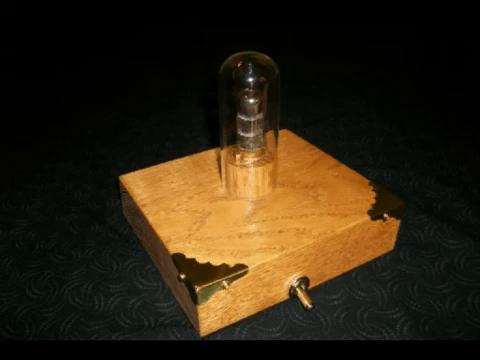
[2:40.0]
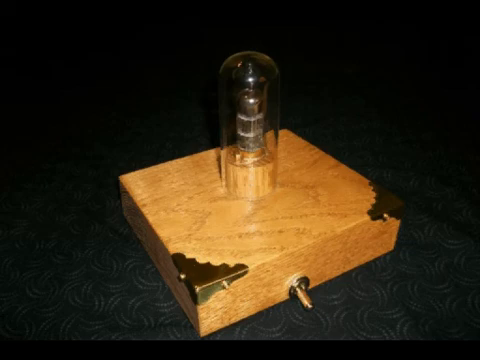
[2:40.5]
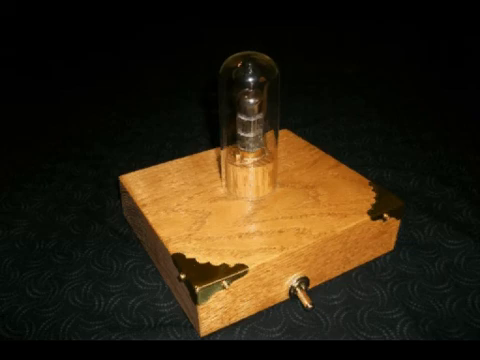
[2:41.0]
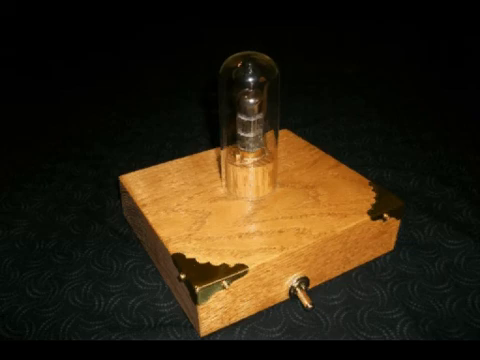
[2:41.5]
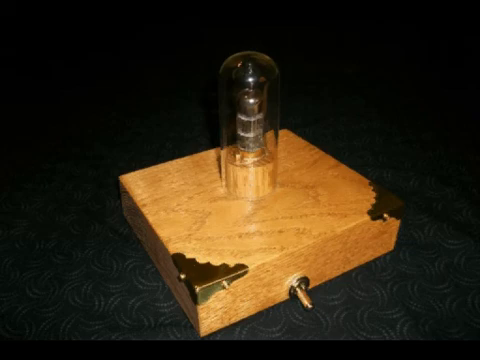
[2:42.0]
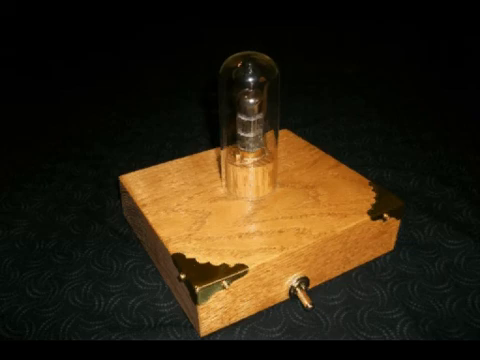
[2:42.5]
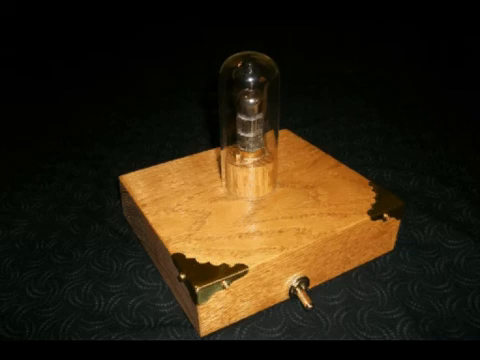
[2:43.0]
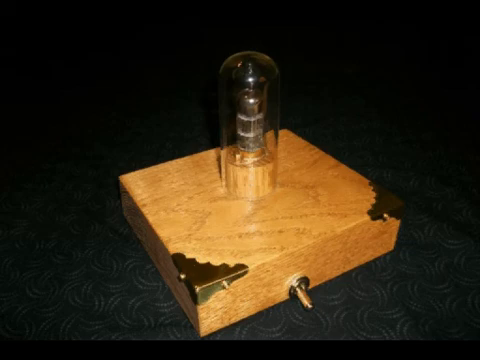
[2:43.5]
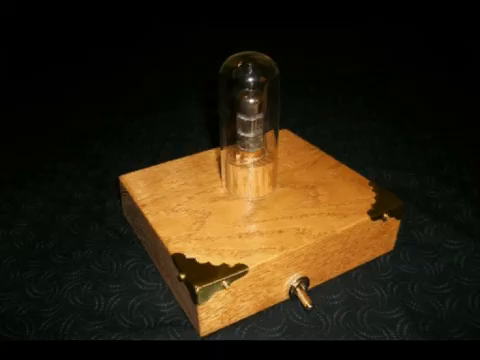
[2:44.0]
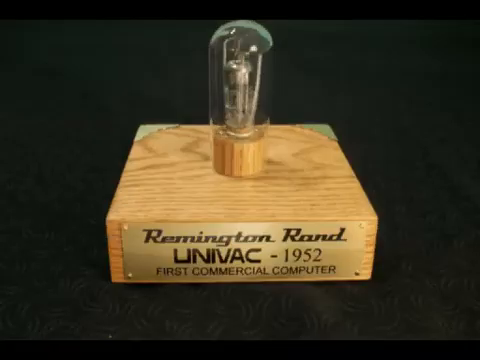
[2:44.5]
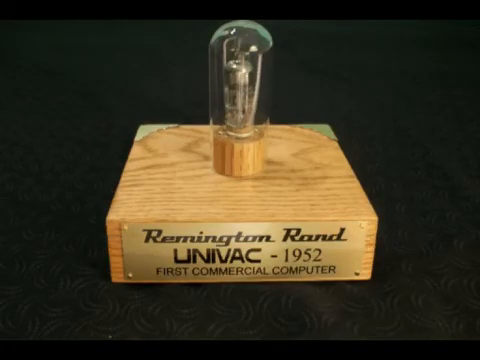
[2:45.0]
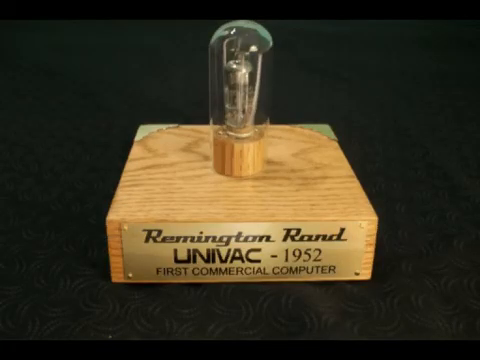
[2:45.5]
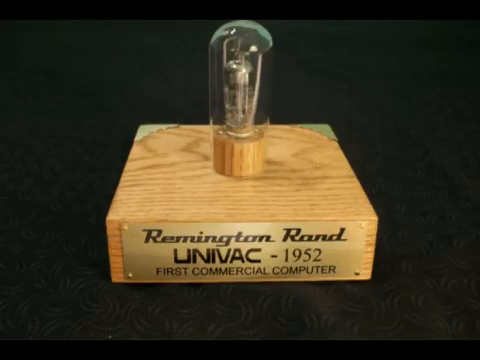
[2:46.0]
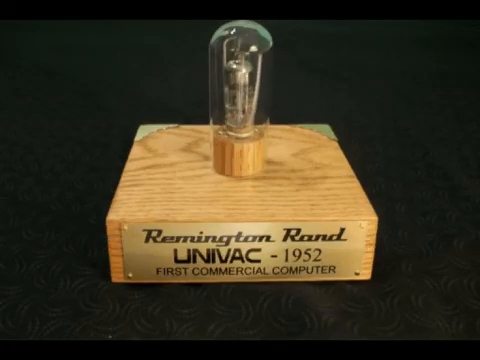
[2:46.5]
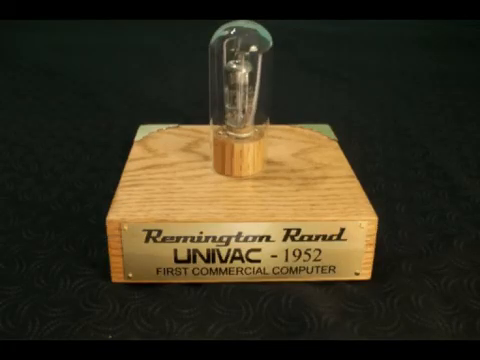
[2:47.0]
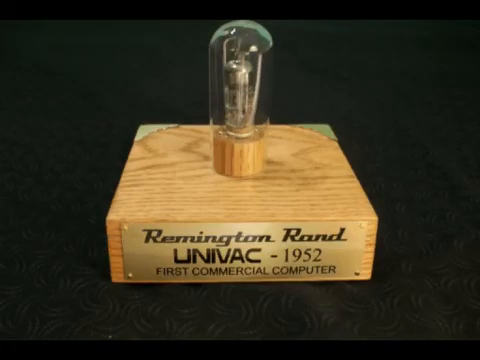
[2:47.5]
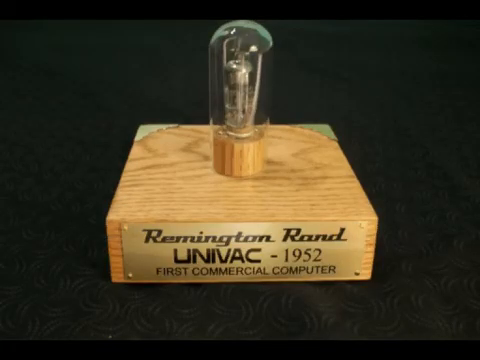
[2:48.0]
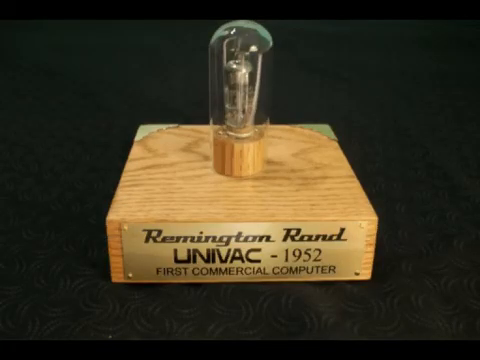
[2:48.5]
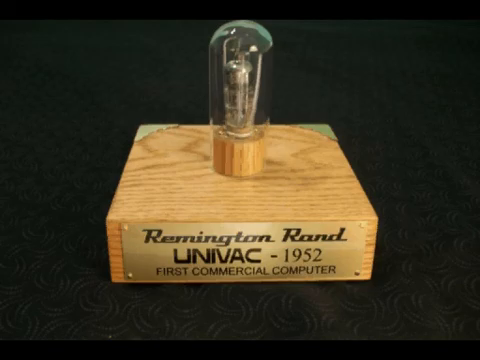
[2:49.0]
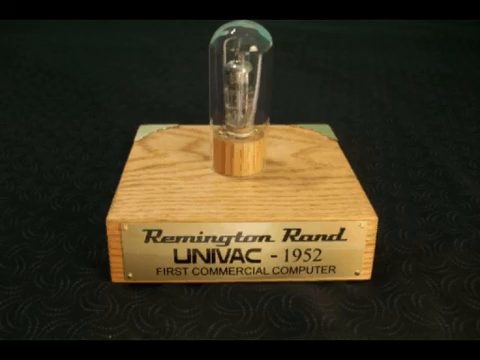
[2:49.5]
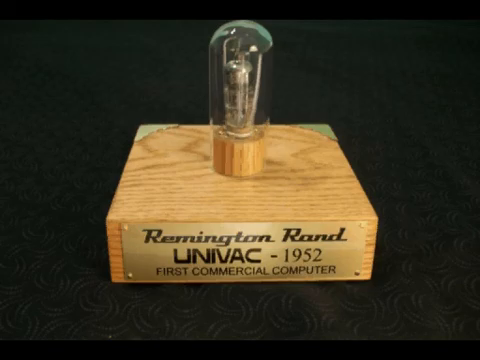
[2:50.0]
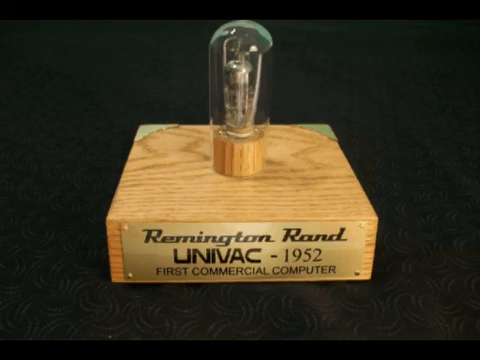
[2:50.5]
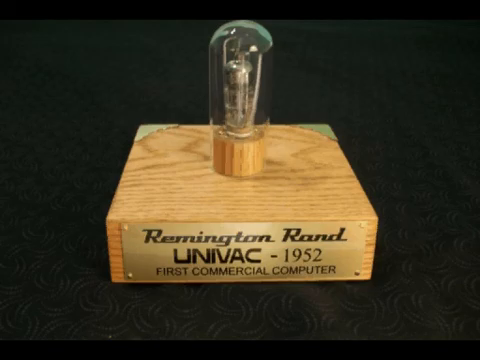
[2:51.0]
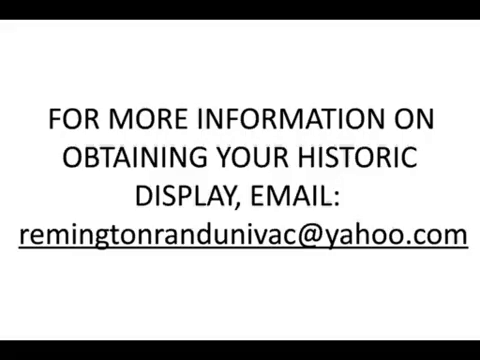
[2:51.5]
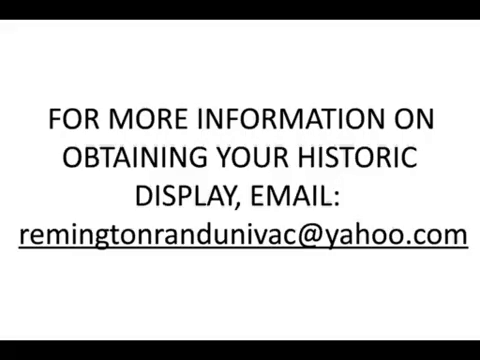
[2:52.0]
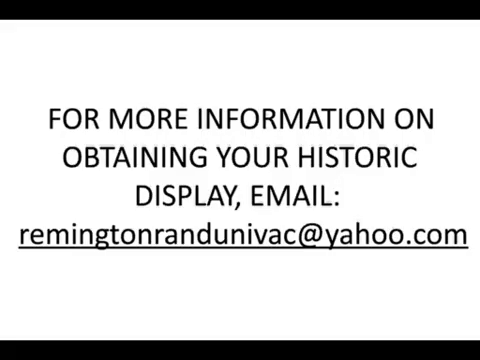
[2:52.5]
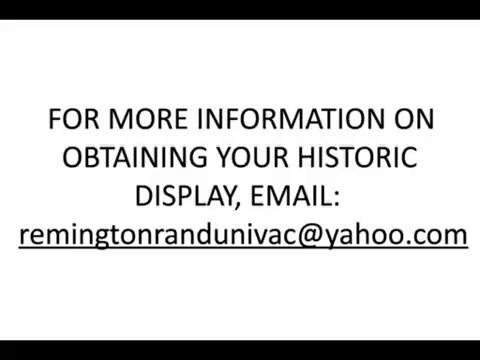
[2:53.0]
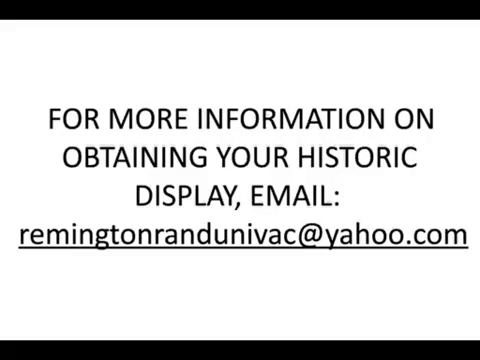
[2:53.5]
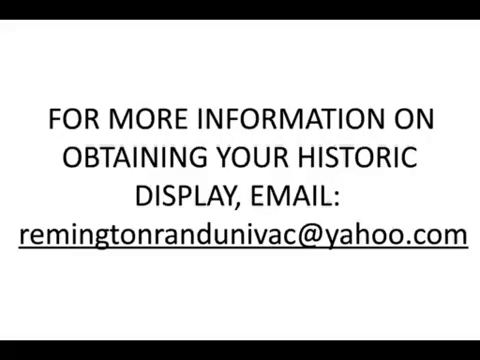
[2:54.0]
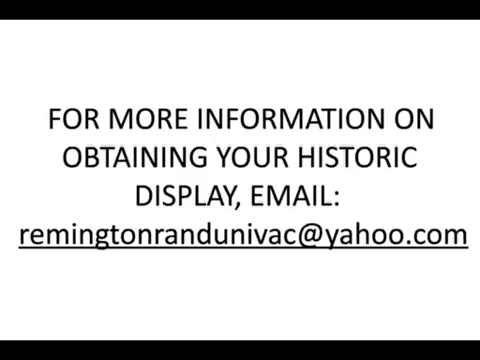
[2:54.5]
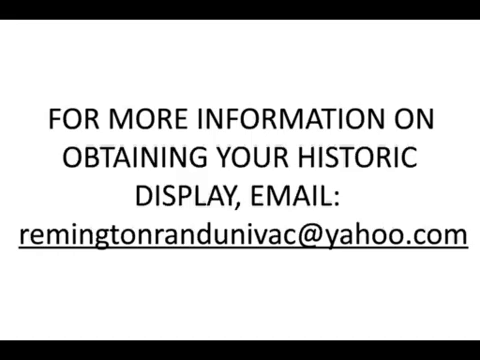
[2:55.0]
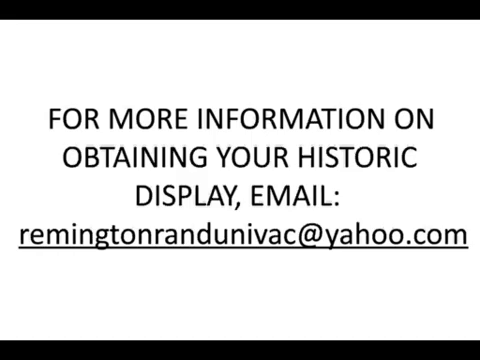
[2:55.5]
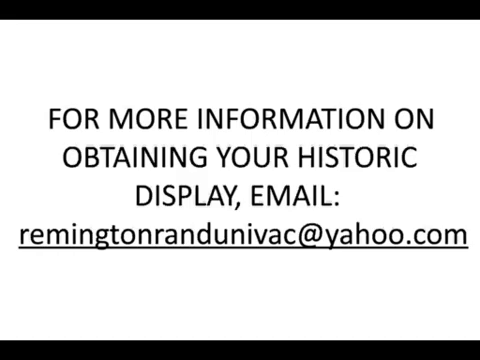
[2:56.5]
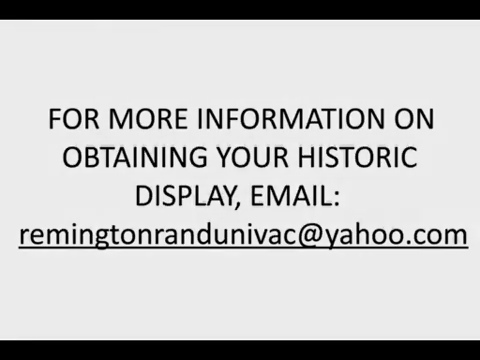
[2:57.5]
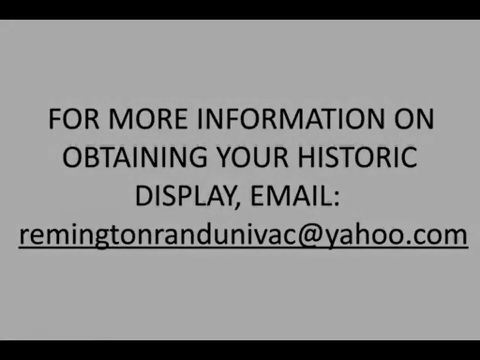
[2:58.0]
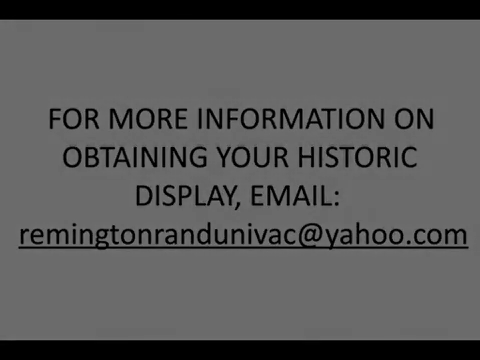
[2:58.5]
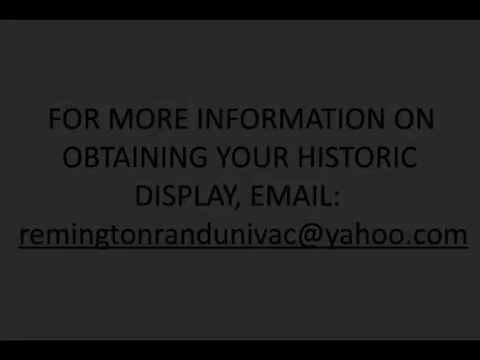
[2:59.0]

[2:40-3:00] The back of a museum piece is shown: a block of wood with brass plates in the corners and a toggle on the back edge. The toggle is switched to the left, and the bulb in the center of the object is not illuminated. The block is sitting on carpet with a swirling pattern. A front view then shows more clearly the brass plate on the front with three lines of text: the first row reads "Remington Rand" in italics and black font, the second row "UNIVAC-1952", and the third row "First Commercial Computer" in all caps. The plate has screws in each corner and covers most of the space on the front. On top of the block is a circular block of wood with a bulb inside another to create a vacuum effect. The back two corners, left and right, each have an ornately designed brass plate. The video then shows a white background with words in all caps in black font: "for more information on obtaining your historic display, email remingtonrandunivac@yahoo.com", with the address underlined. That image then fades away to a black screen.